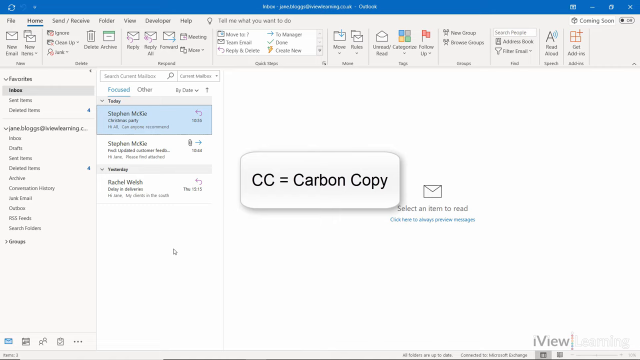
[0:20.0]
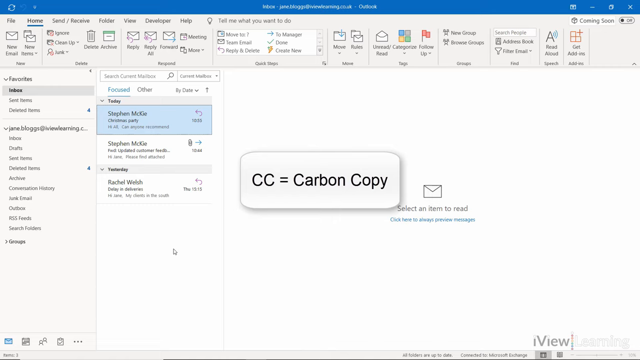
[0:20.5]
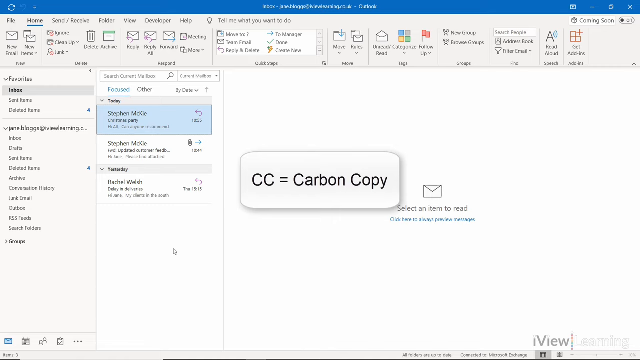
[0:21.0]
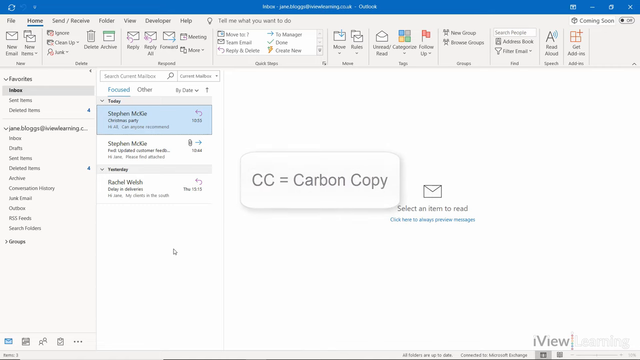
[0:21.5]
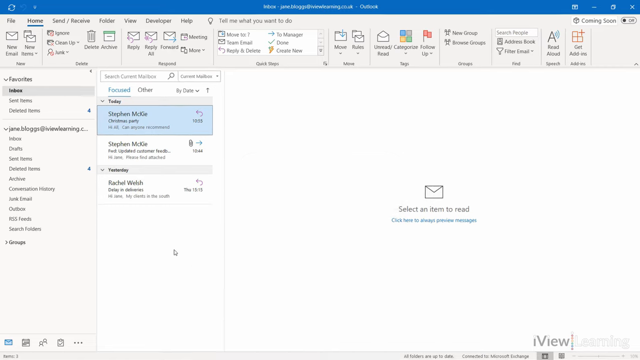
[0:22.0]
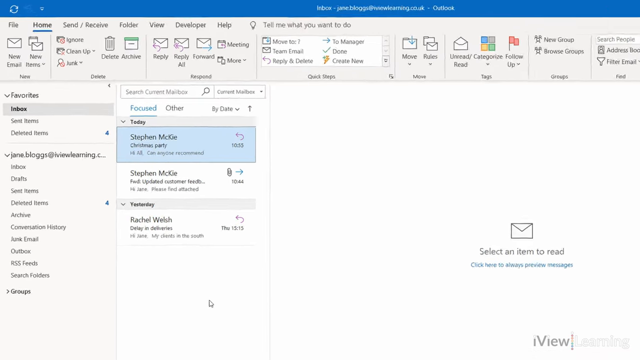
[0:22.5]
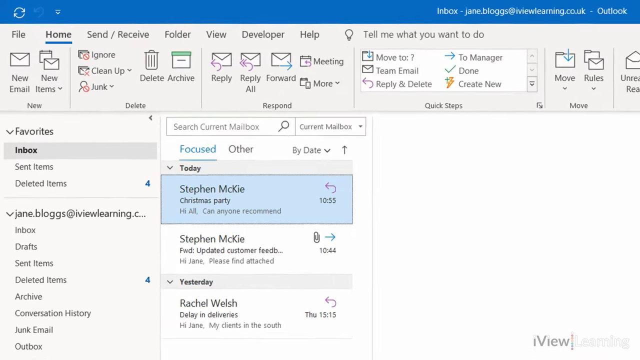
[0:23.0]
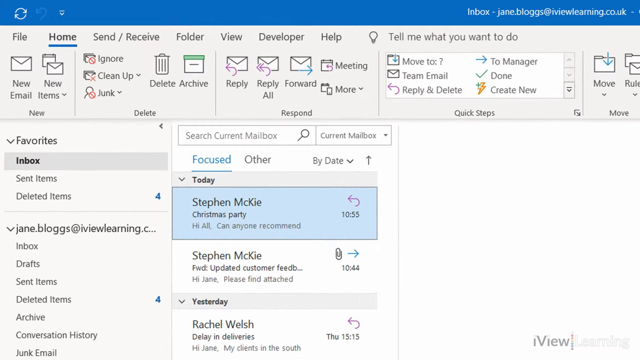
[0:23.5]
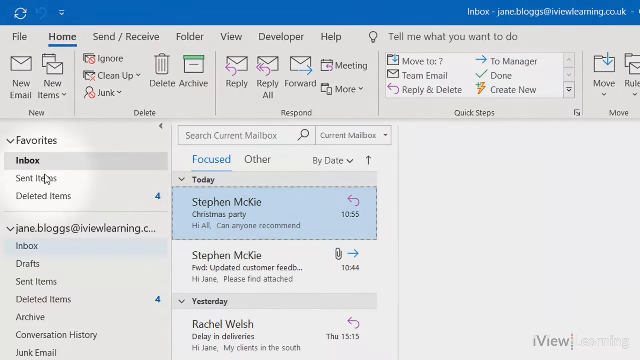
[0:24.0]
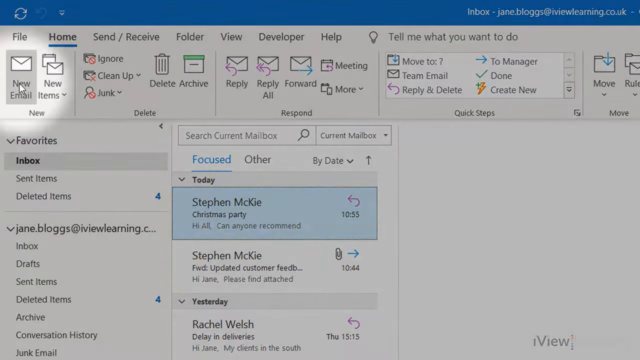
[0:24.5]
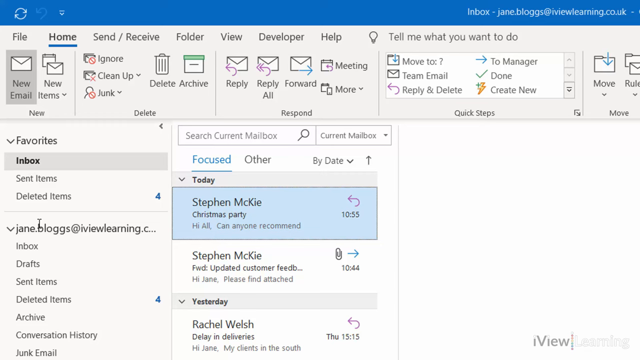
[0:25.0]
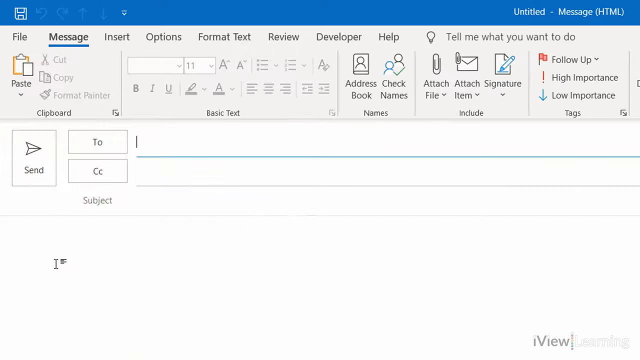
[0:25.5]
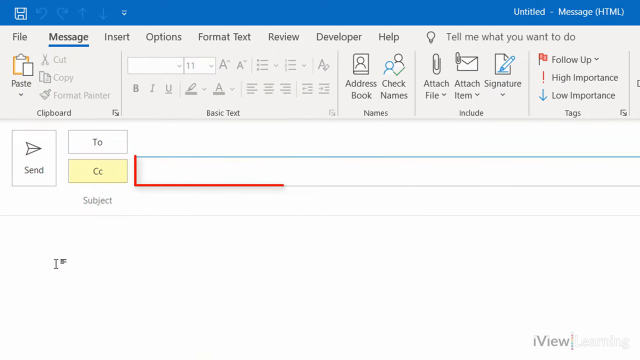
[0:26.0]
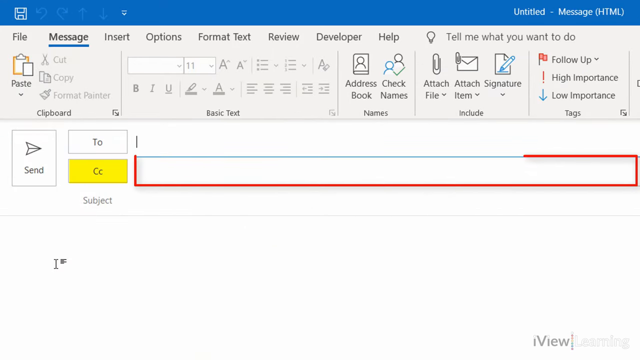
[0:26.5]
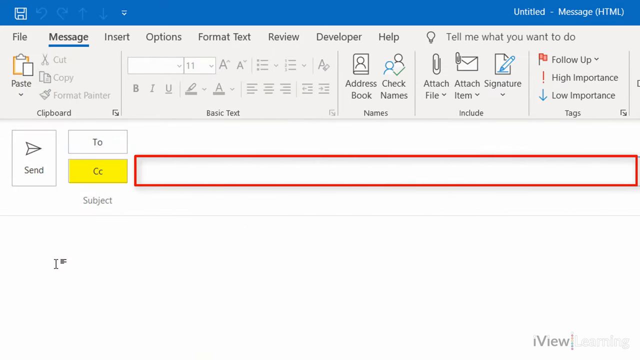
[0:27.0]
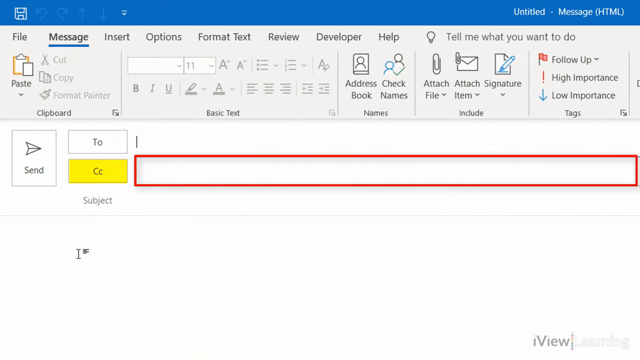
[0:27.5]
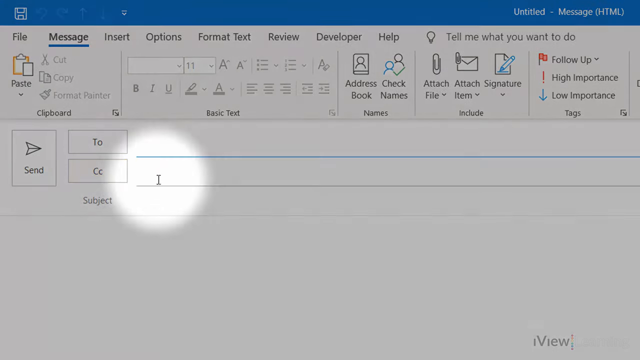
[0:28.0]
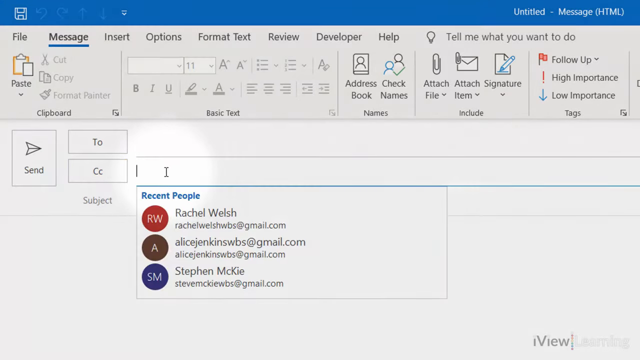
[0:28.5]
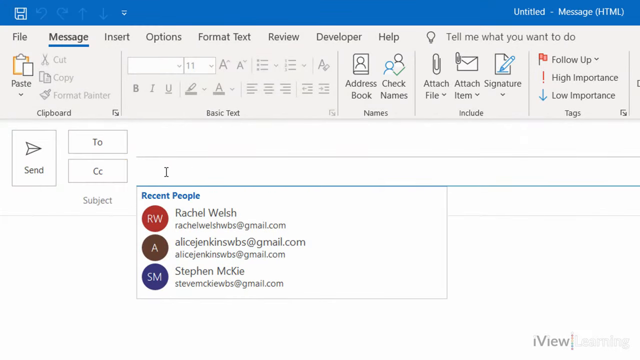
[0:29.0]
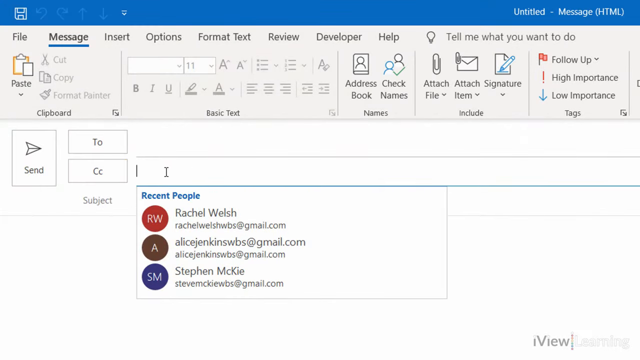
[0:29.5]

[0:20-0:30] The rounded rectangular text box reading "CC equals carbon copy" fades away, and the view zooms in to the top left corner of the screen, highlighting the Outlook application. A mouse view highlights the new mail button, which brings up a new window for sending an email. A red rectangular animation highlights the CC field of the new email. A highlight then dims the area around a circle at the cursor, showing where to click to enter the CC field; the cursor moves onto this field, and Outlook suggests three names to enter.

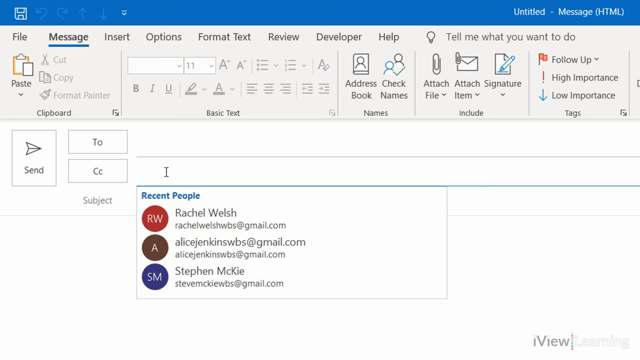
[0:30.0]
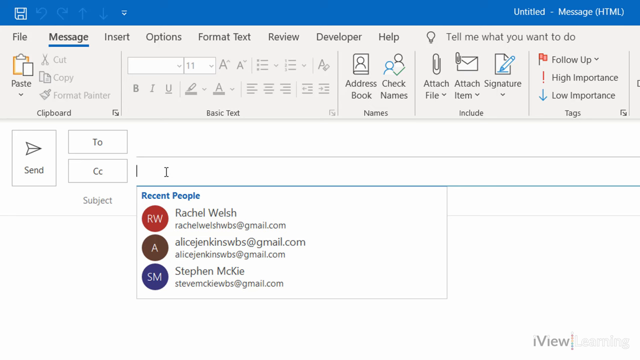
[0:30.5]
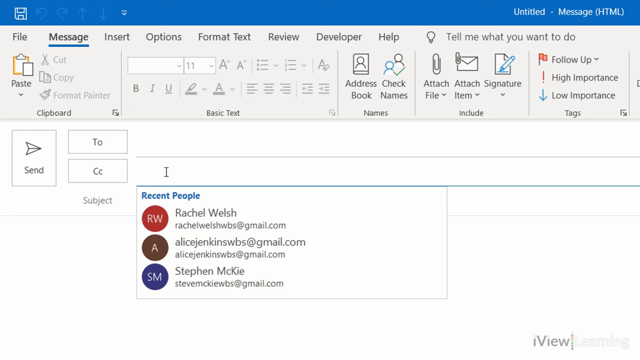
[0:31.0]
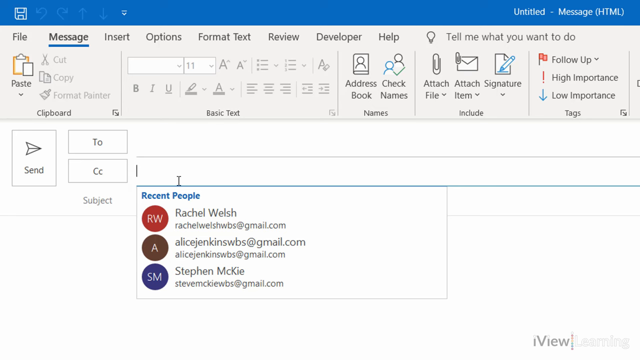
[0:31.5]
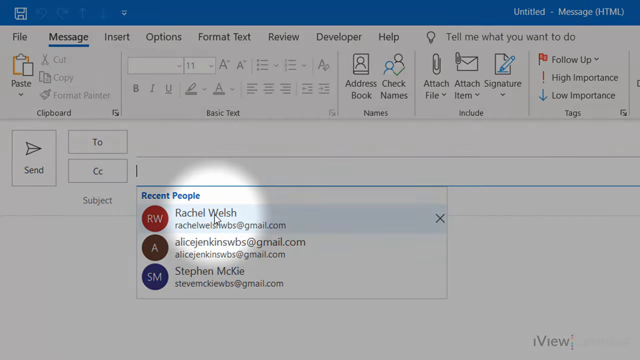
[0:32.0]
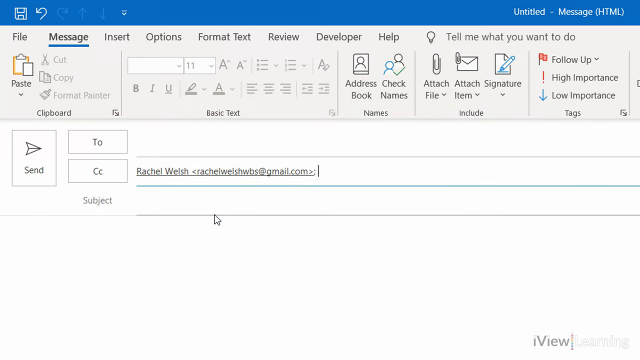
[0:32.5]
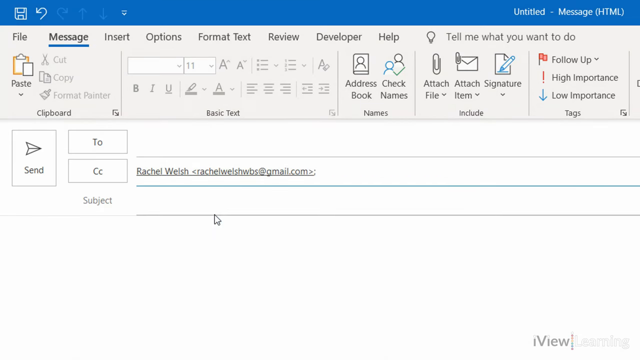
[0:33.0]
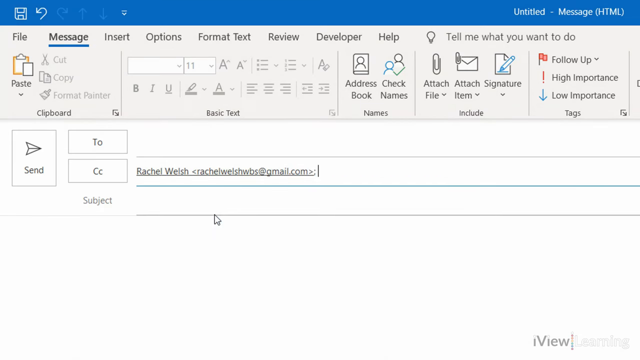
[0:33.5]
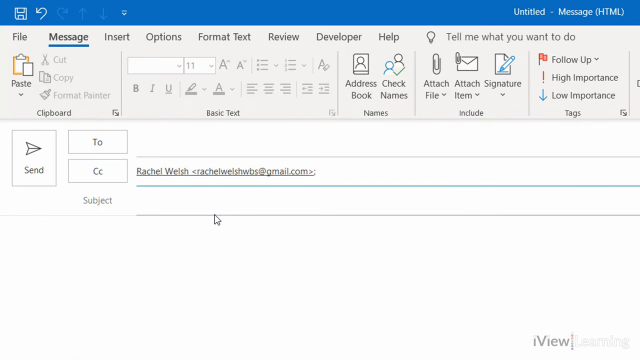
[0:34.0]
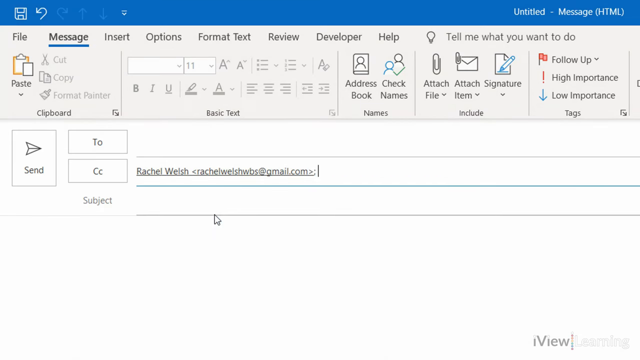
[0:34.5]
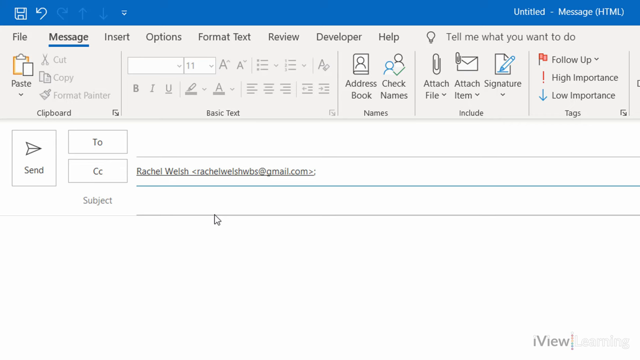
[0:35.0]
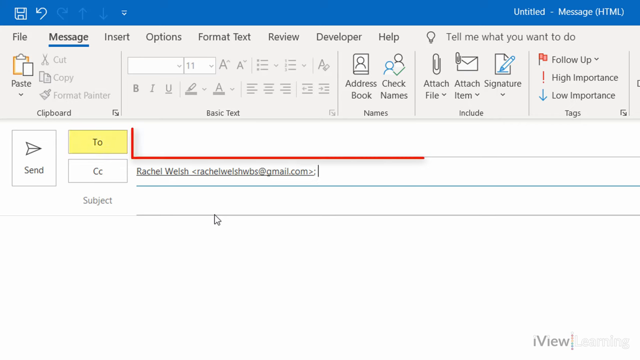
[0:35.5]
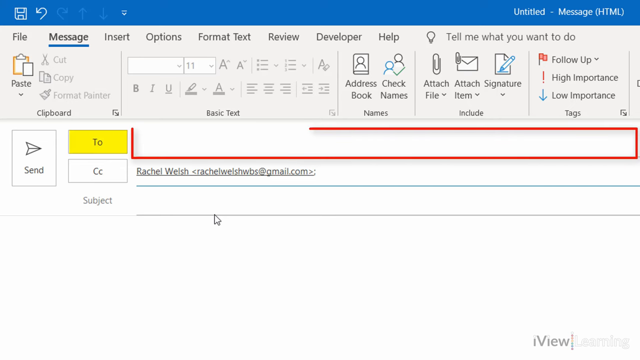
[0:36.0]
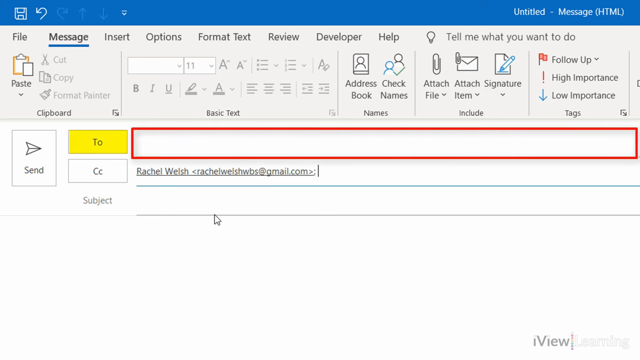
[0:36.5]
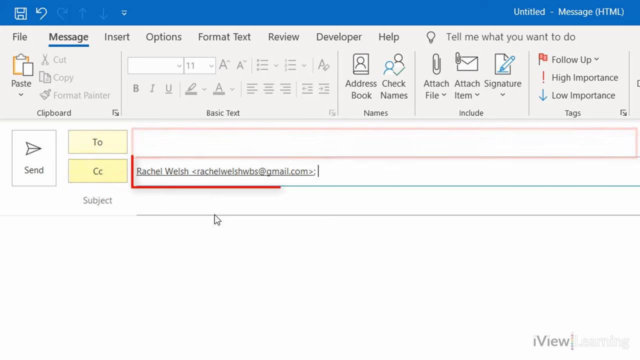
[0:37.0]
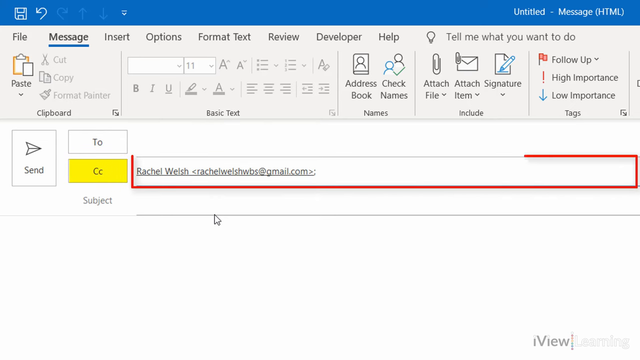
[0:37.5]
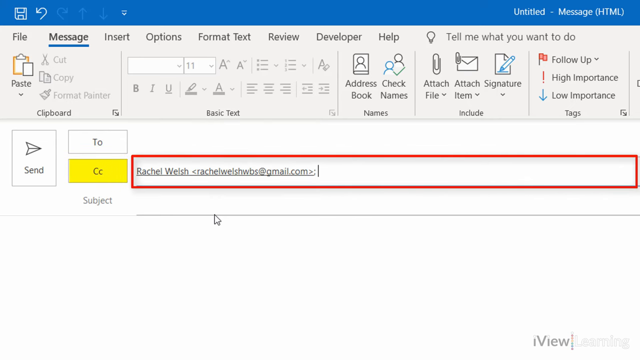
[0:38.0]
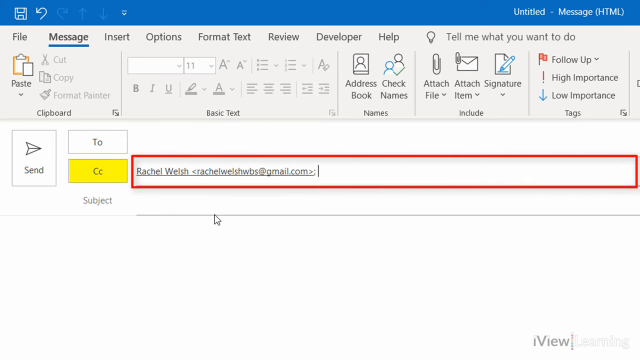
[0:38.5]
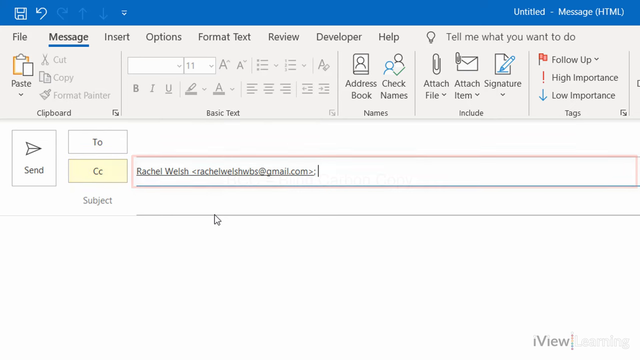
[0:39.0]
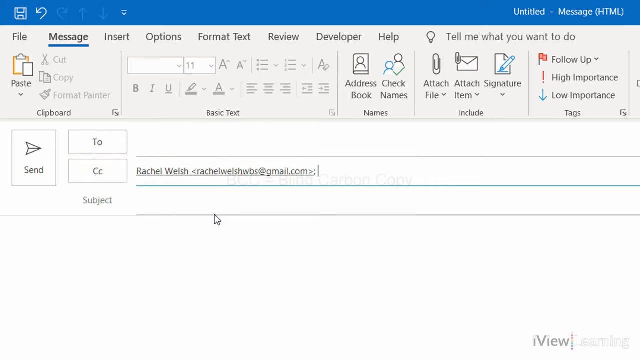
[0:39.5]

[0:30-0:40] The cursor continues to flash, and a dimming animation shows the first suggested person to click on. The mouse moves downwards and clicks on this name, Rachel Welsh, entering her name into the CC field. A red rectangular animation moving counterclockwise highlights a field, and then the red box animation highlights the field underneath it, the CC field, now filled in with Rachel Welsh's email information. Both fade away, and a white rectangular text box with rounded corners appears reading "BCC equals blind carbon copy". This appears to be a tutorial on how to use the new email function and how to CC and BCC people.